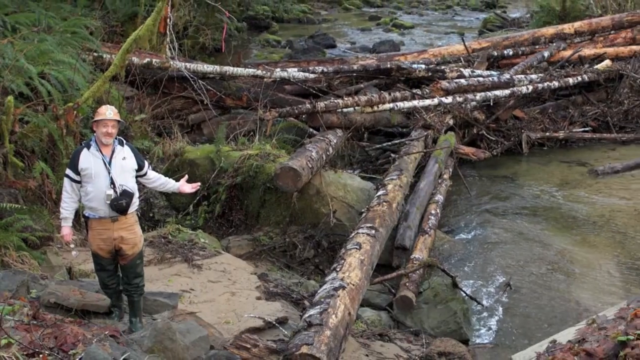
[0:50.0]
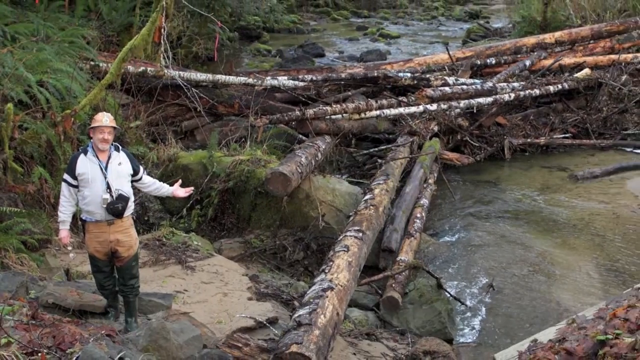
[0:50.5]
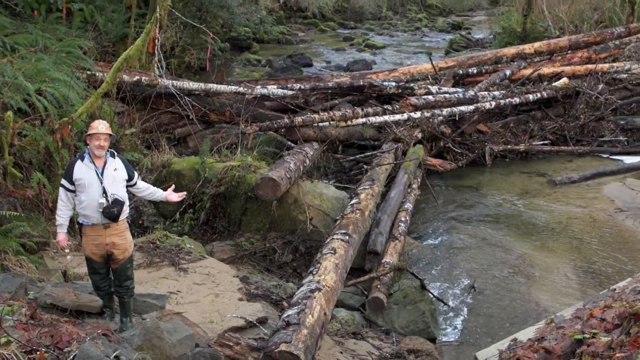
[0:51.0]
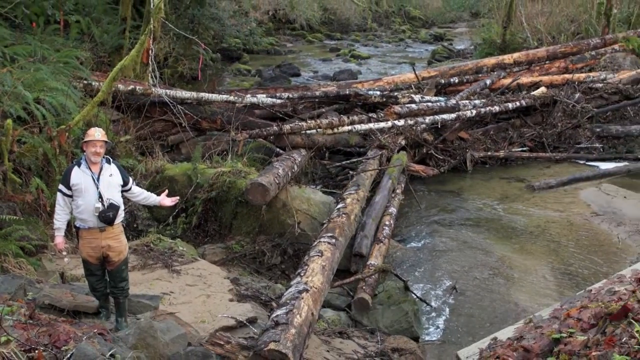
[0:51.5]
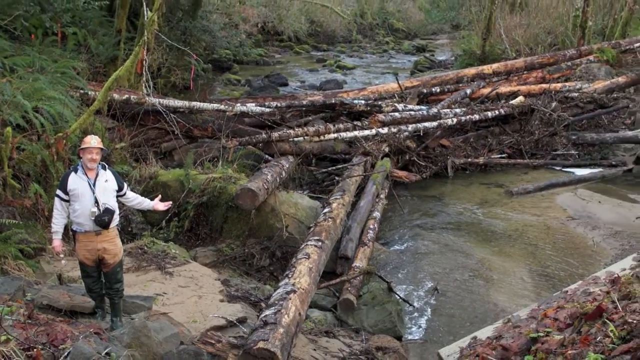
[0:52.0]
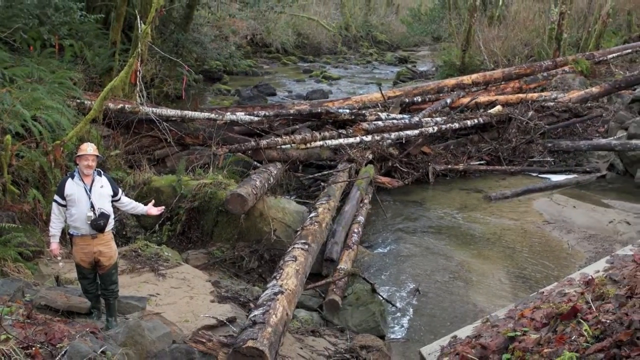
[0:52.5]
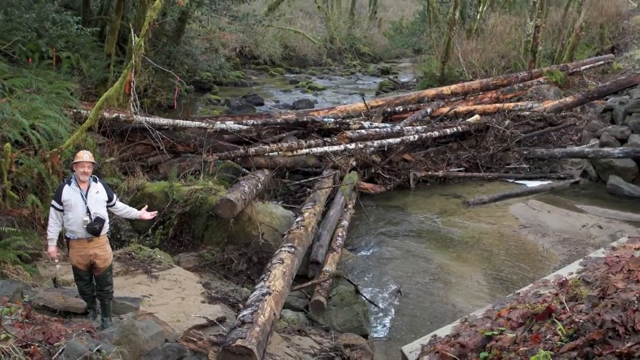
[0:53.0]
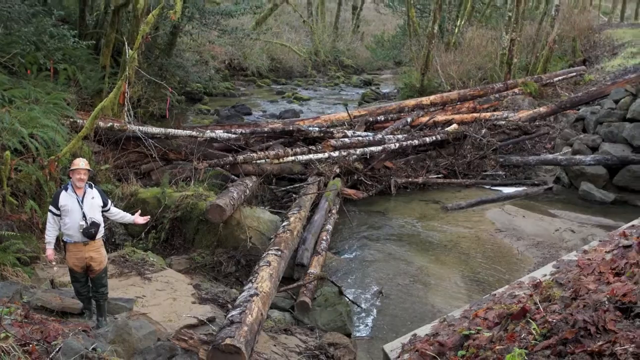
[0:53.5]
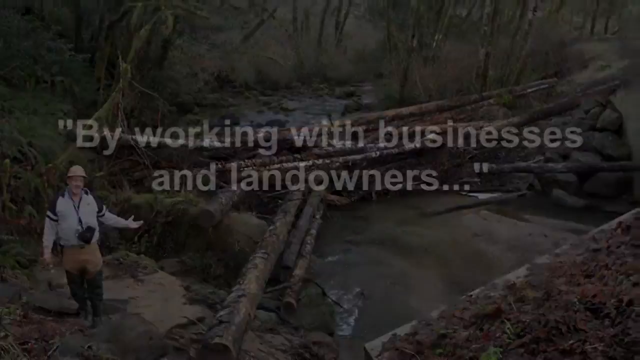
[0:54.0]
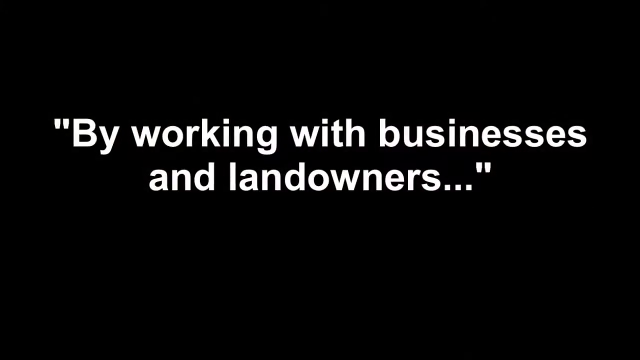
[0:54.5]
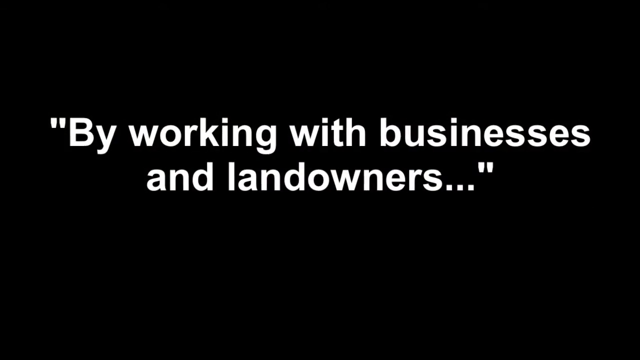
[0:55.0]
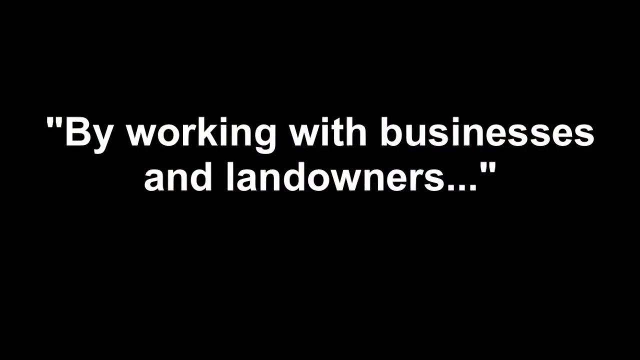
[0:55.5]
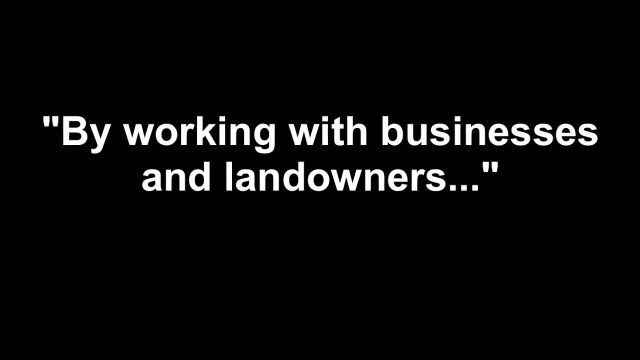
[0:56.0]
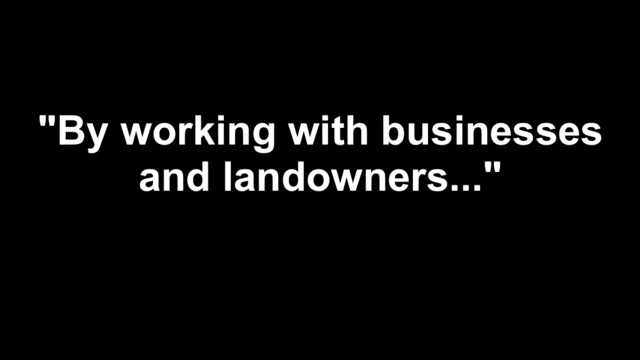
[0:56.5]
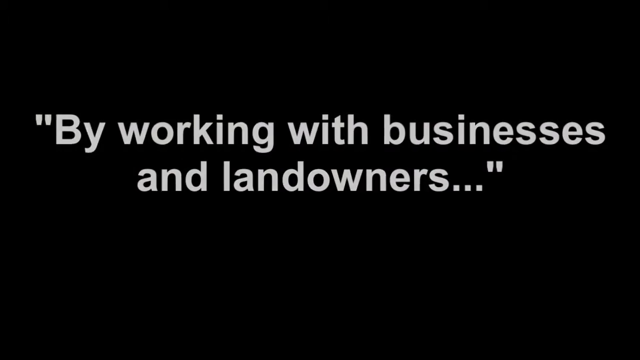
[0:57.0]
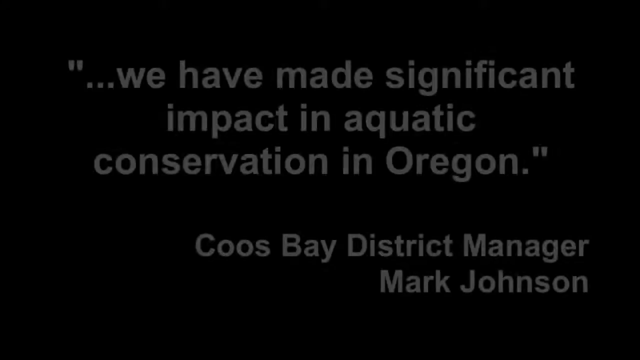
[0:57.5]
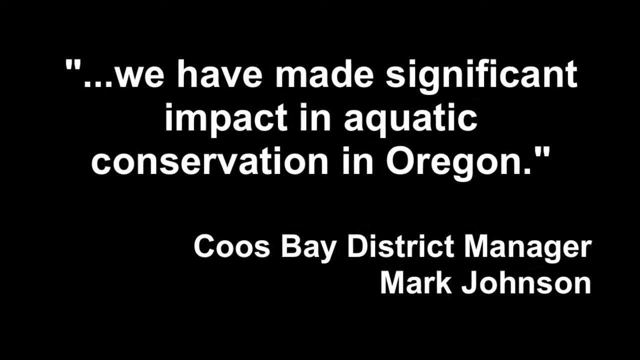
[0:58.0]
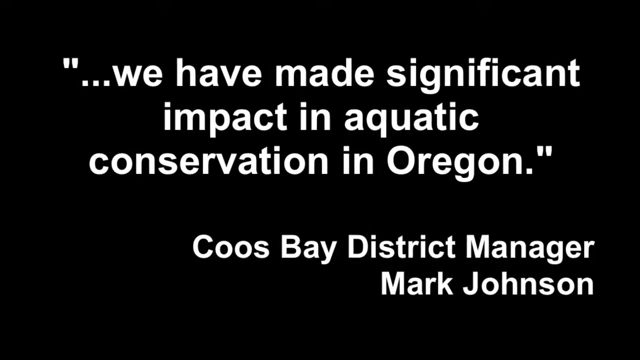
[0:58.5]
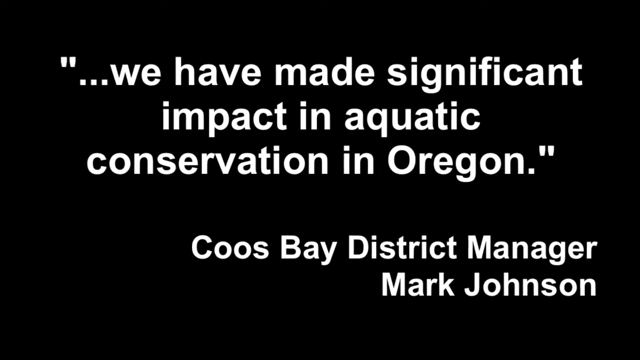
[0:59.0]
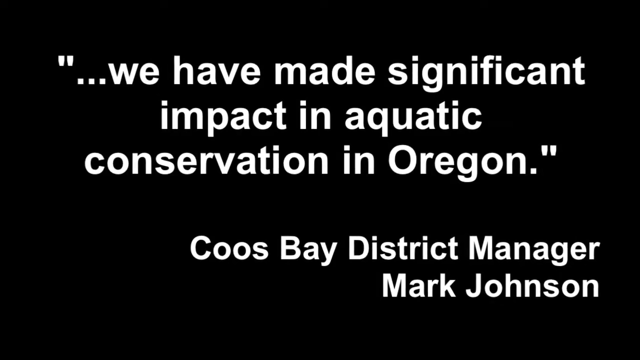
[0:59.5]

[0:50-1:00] An older white man is posed by a bunch of cut-down tree trunks that are in a pile behind him, kind of in a cross-like formation. They are in a mossy-like area of a creek, and the man is posed to the left of them in a dirt-like area with a lot of moss. He wears a yellow construction hat, a white jacket with black stripe patterns at the shoulders, cargo pants that look muddied from the thigh downward, and boots. He wears a black lanyard with some sort of black pouch on it. He is posed with his arm out, kind of showing the cut-up logs. The still photo is zoomed out of. The video then cuts to a black background with white text that reads "by working with businesses and landowners. we have made significant impact in aquatic conservation in Oregon. Coos Bay District Manager, Mark Johnson."